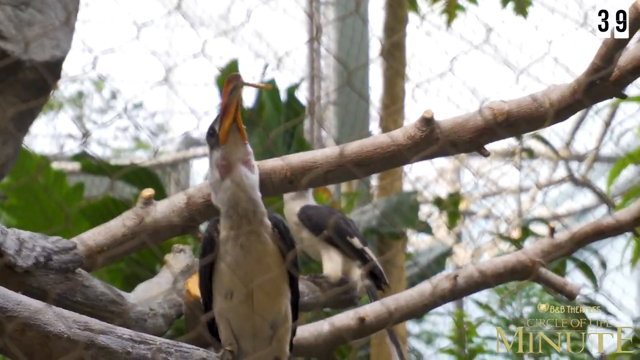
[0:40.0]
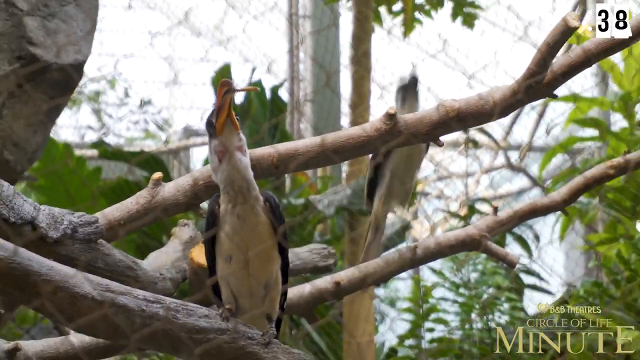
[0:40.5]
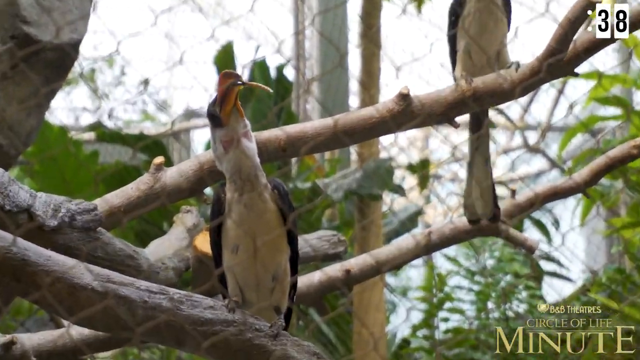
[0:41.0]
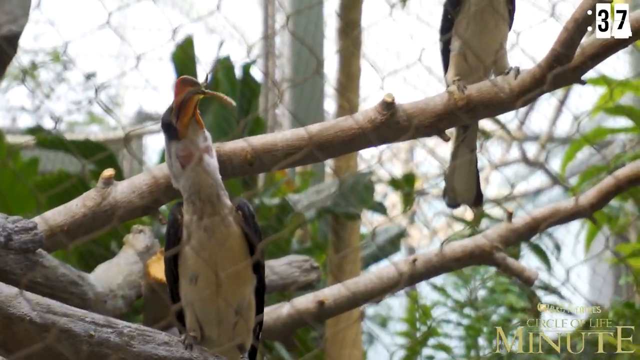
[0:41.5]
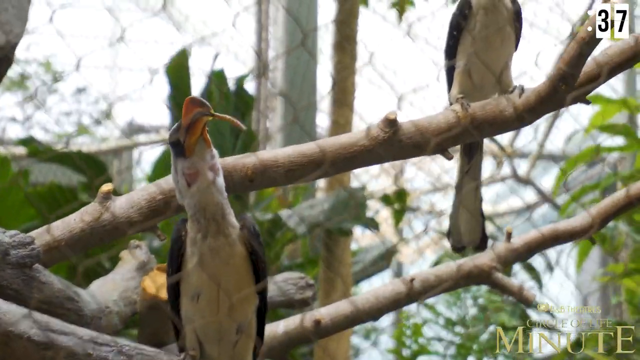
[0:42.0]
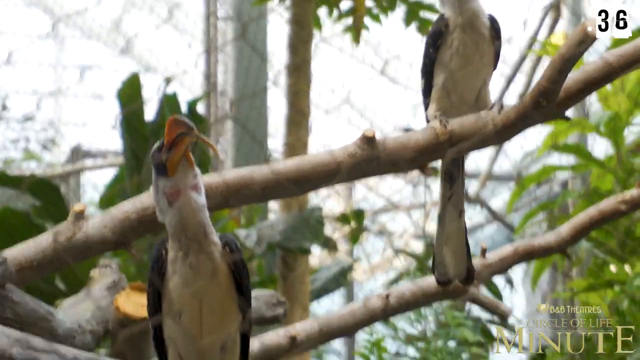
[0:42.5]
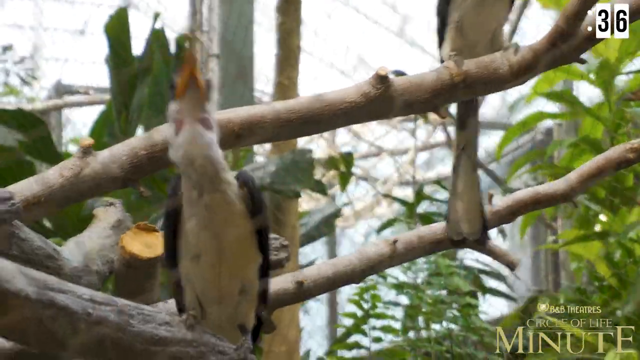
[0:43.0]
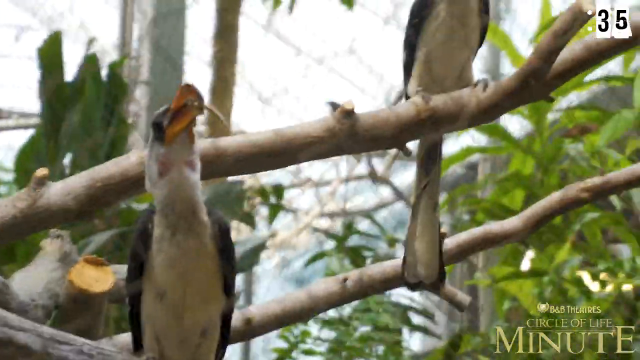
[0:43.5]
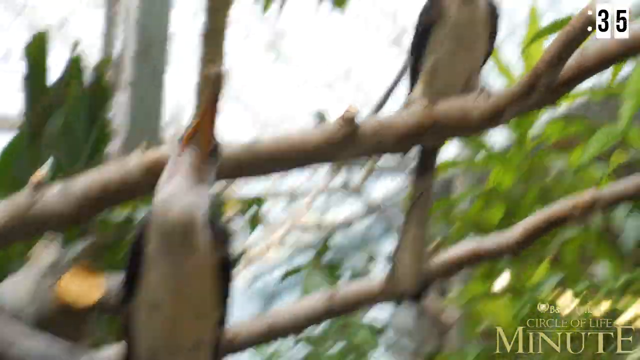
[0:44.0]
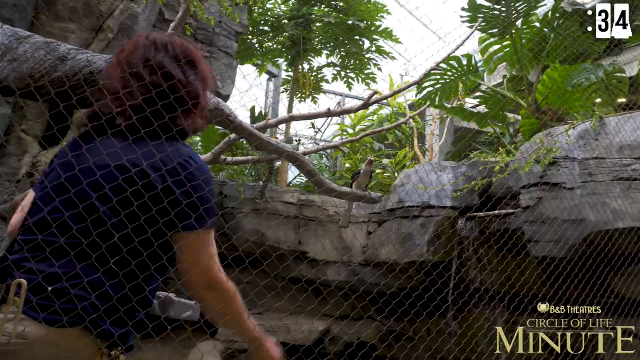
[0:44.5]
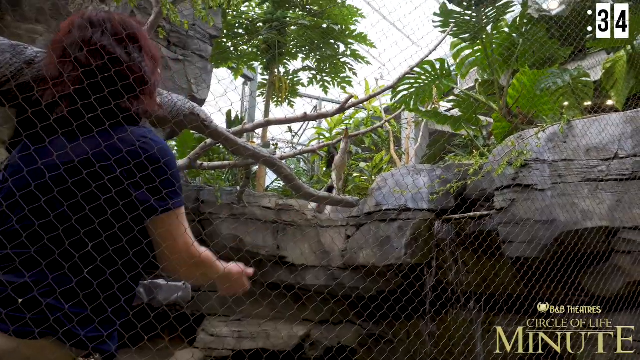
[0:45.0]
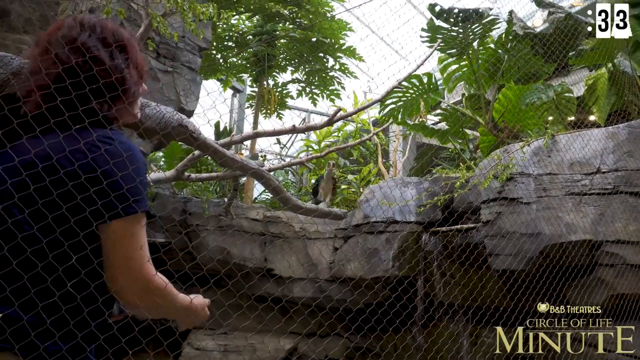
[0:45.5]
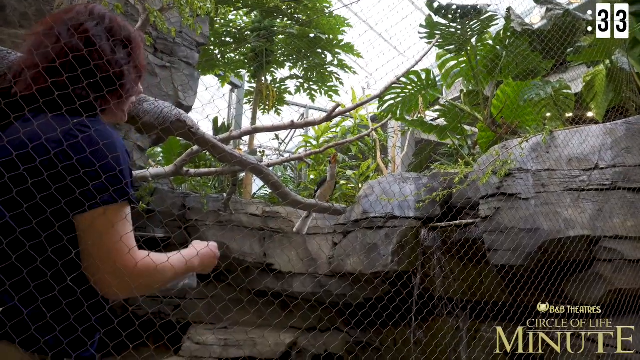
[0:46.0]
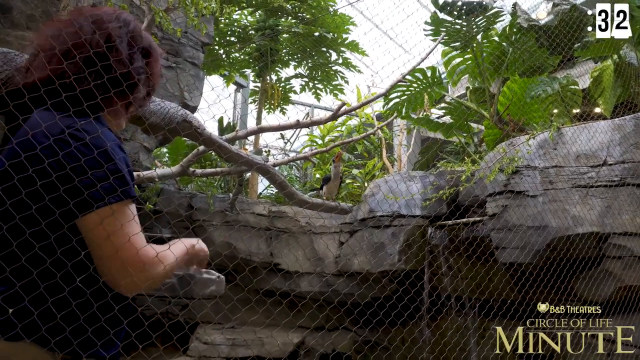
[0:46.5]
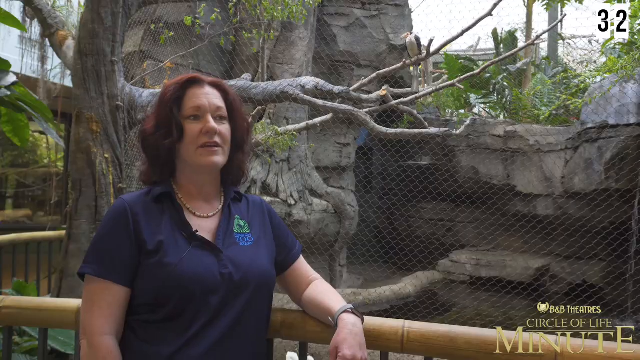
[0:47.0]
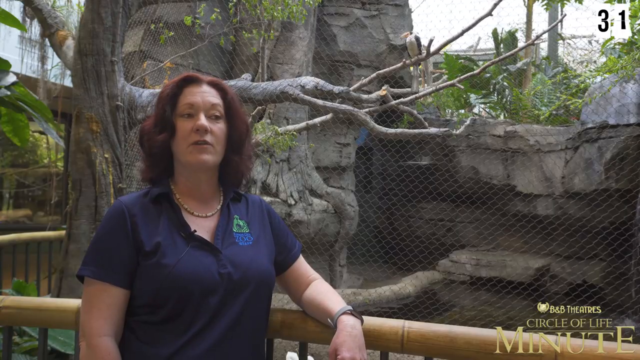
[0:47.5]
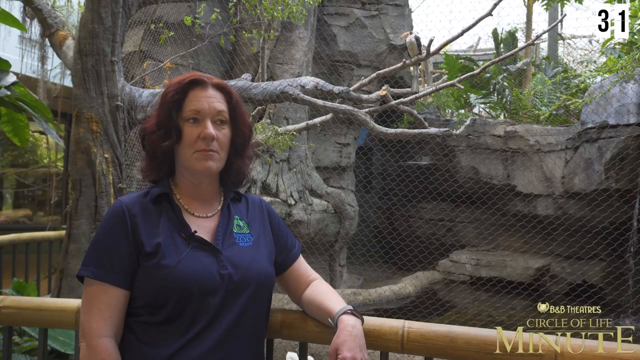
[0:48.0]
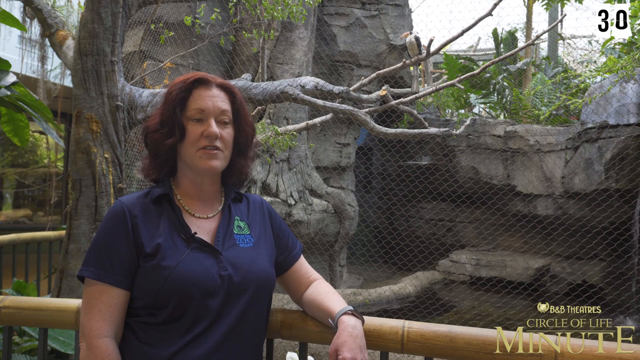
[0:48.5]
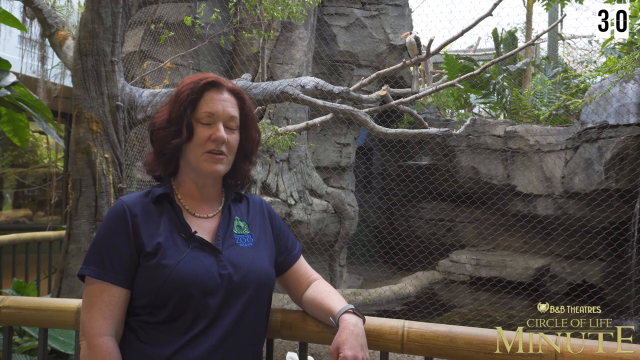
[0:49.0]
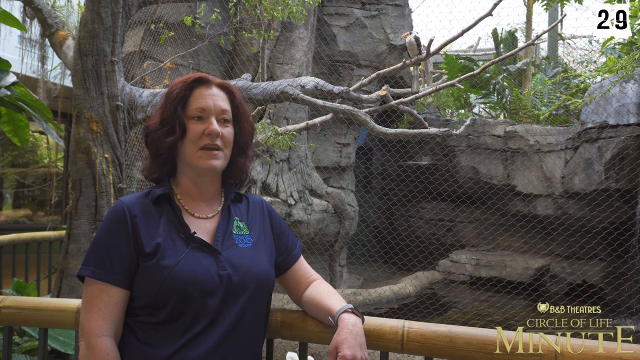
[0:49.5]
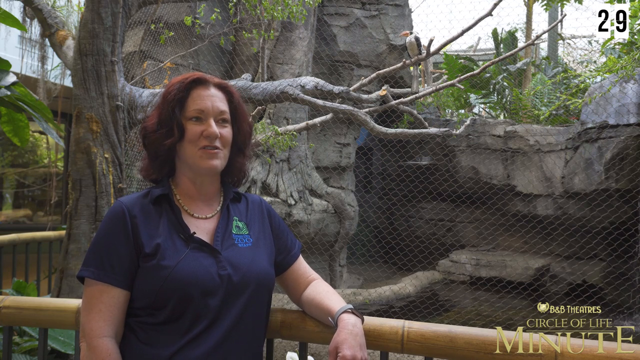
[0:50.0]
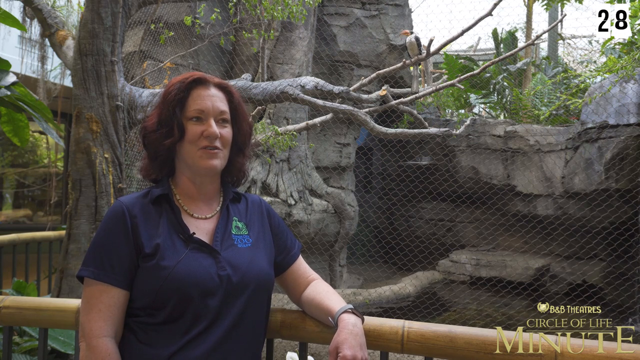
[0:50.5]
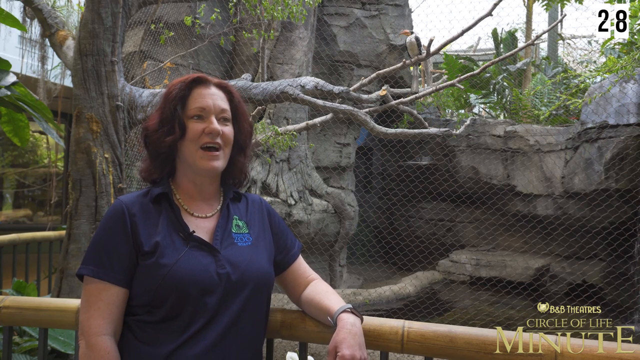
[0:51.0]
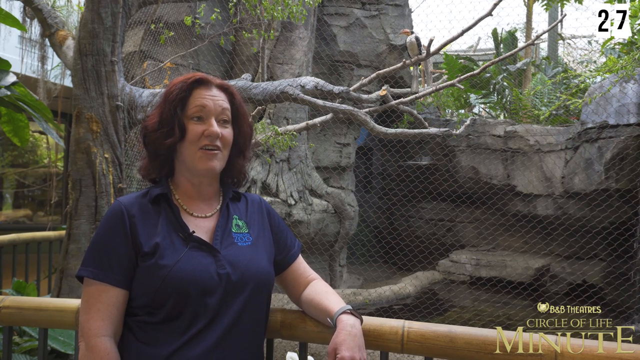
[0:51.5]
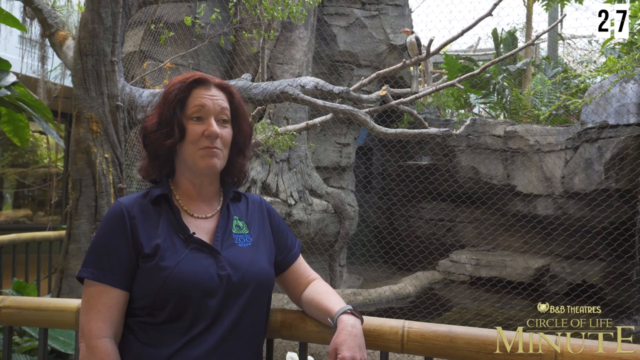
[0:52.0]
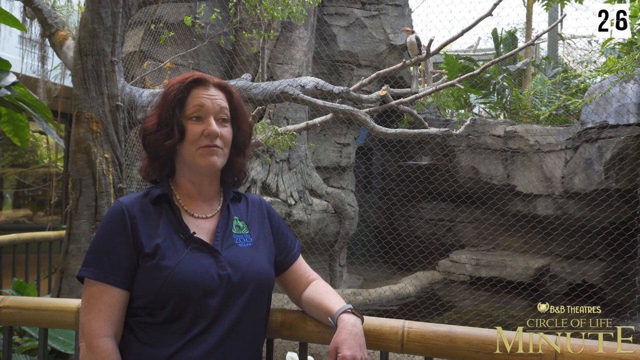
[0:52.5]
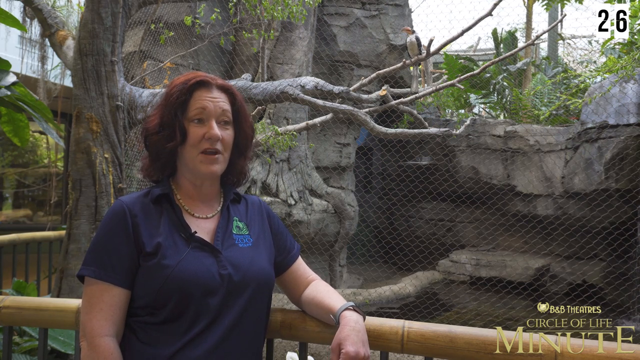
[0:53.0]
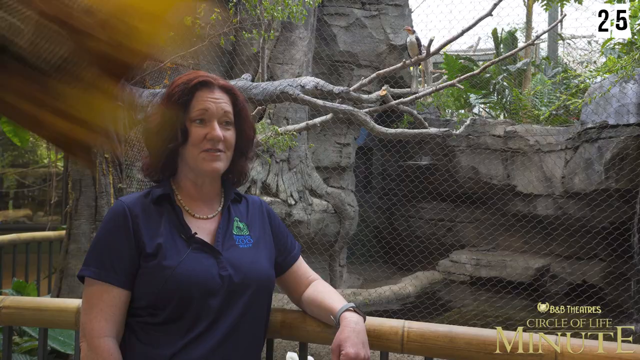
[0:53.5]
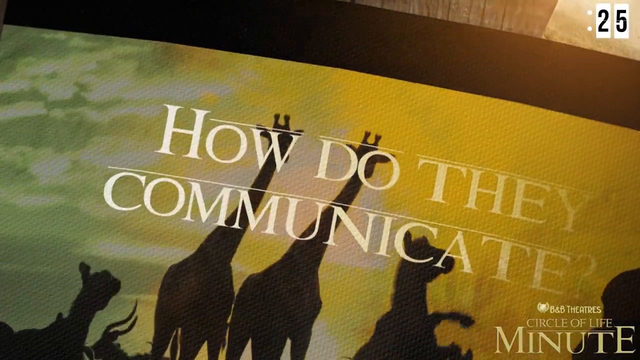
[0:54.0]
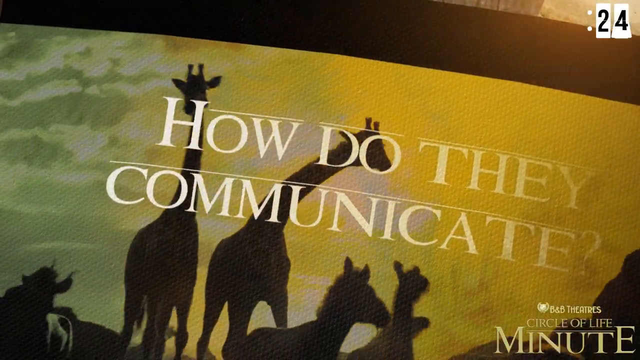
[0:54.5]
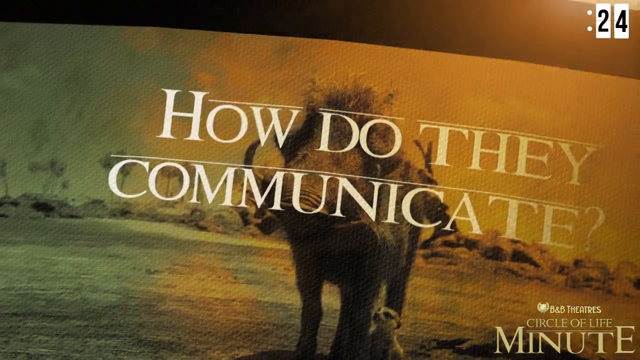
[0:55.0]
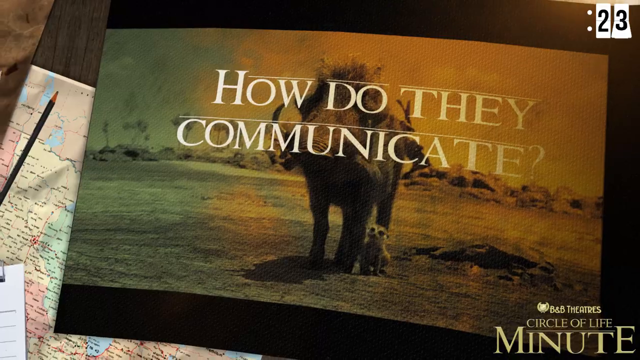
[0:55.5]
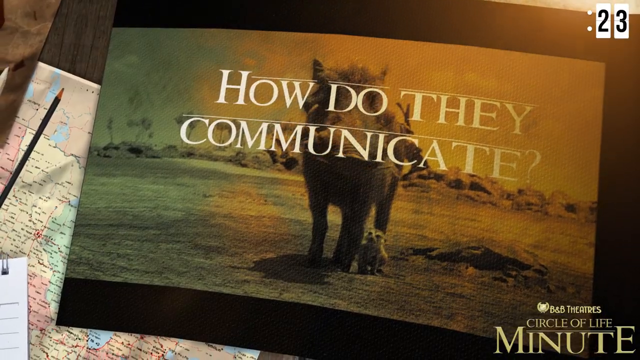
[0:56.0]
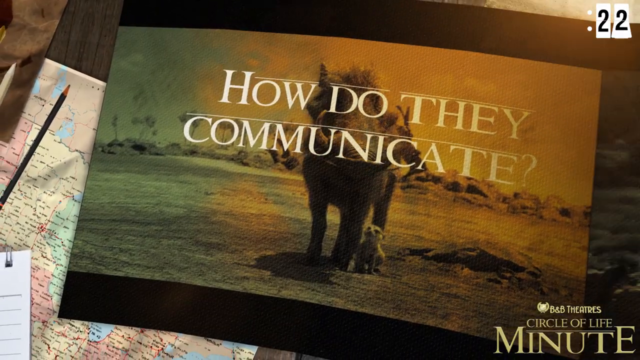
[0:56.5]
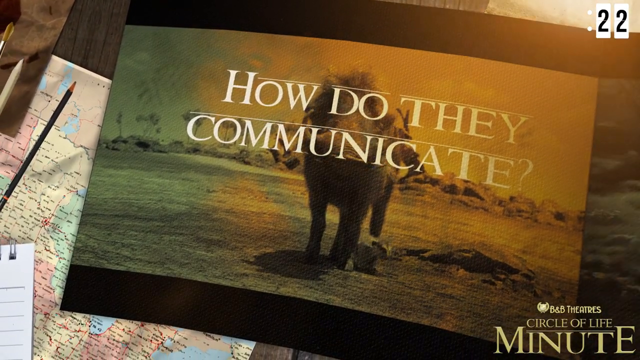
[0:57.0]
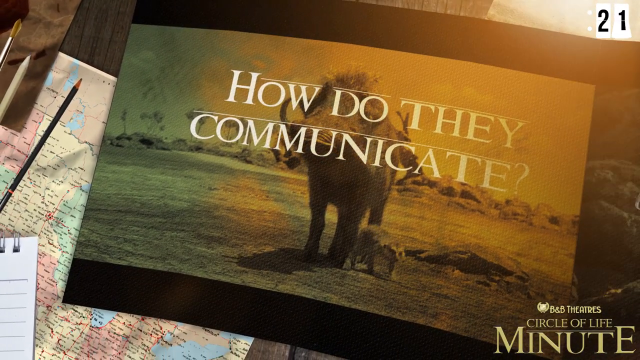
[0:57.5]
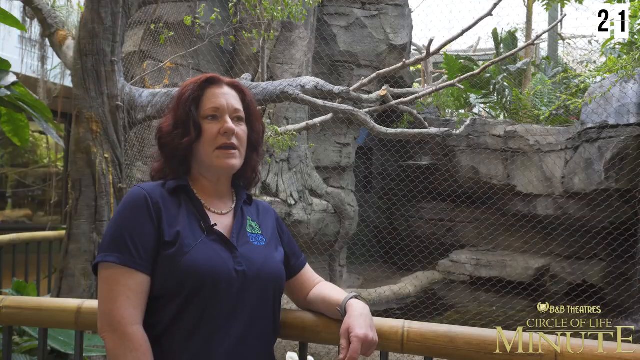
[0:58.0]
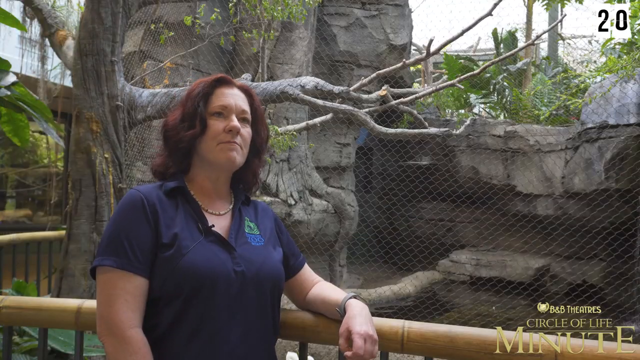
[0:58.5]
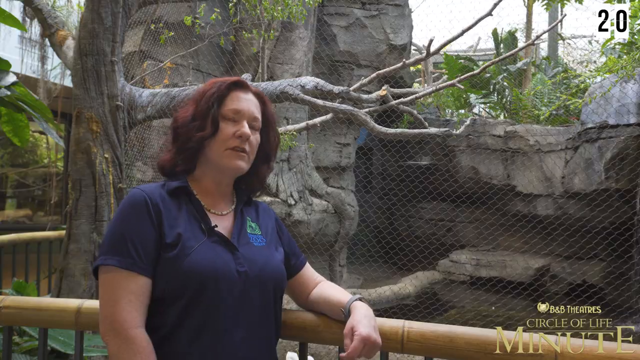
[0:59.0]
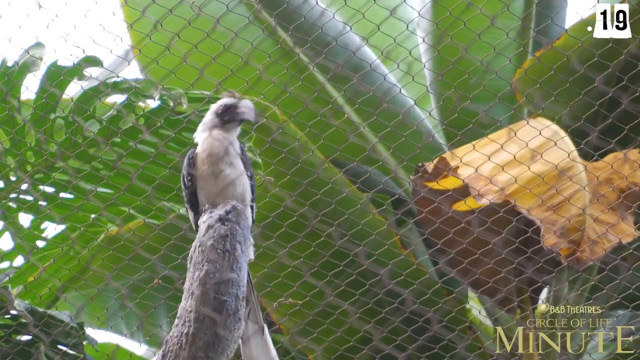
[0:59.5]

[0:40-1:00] Tree branches and green leaves from different trees are visible behind the wiring, and two birds are standing on the branches. Both have white bellies and black wings; the first has an orange beak and the one on the top branch has a black beak. Heidi F enters the big cage and throws food at the birds. Next, Heidi F rests her left arm, on which she wears a watch, on a wooden fence, with the bird visible behind the wiring in the shot. The video cuts to a meerkat and a warthog with the caption "how do they communicate?" It returns to Heidi F and then once again shows the bird with the black beak.